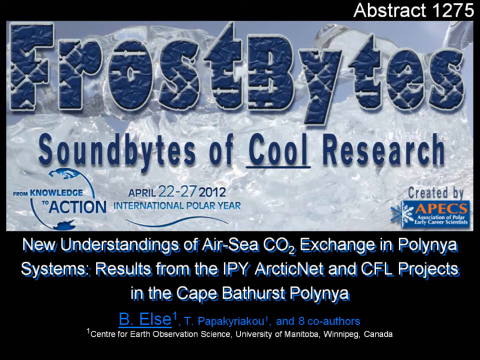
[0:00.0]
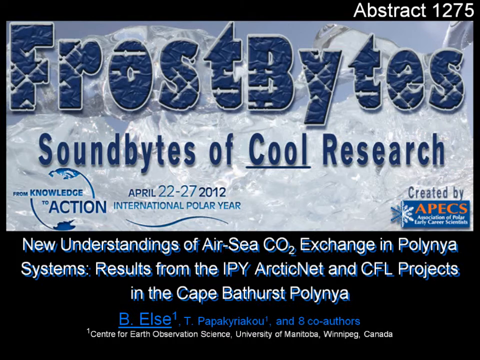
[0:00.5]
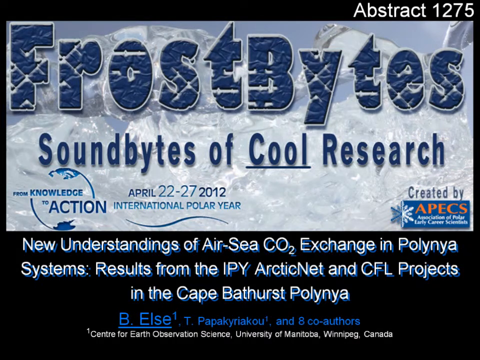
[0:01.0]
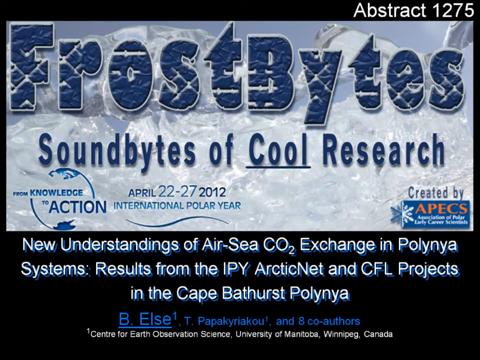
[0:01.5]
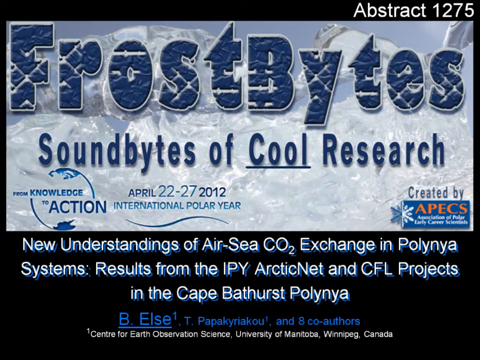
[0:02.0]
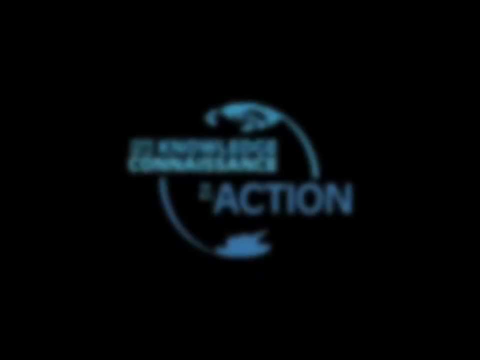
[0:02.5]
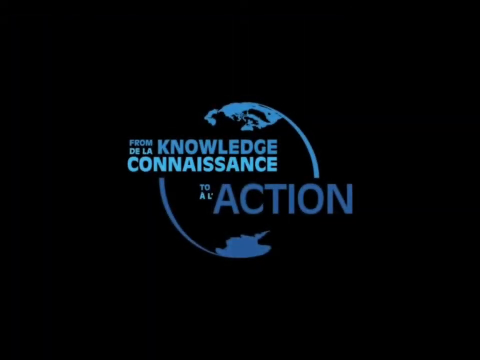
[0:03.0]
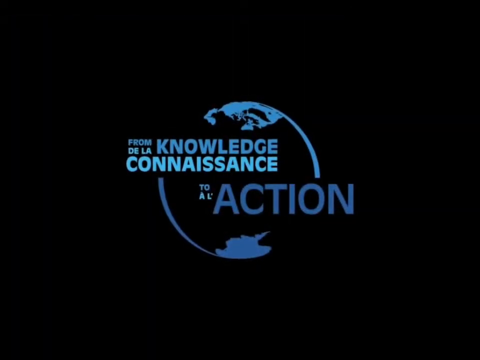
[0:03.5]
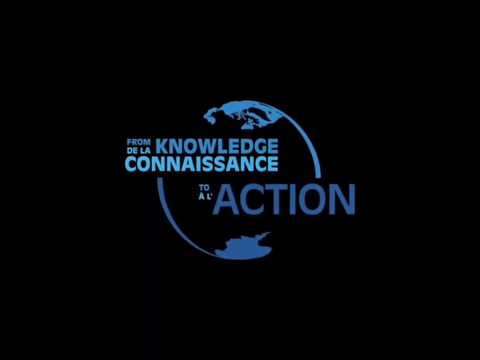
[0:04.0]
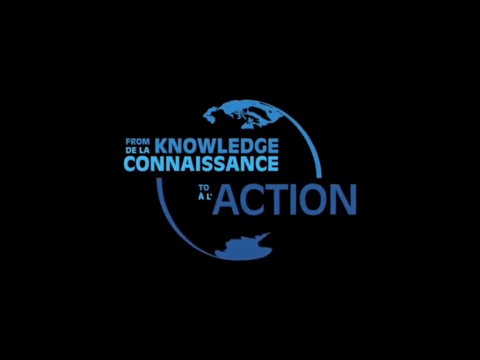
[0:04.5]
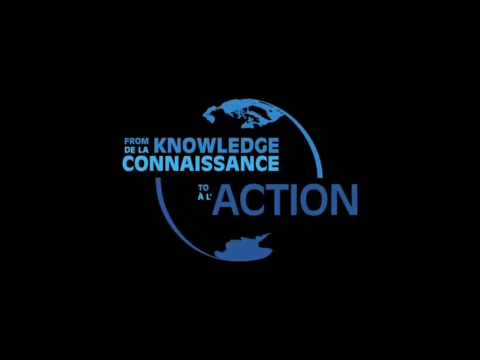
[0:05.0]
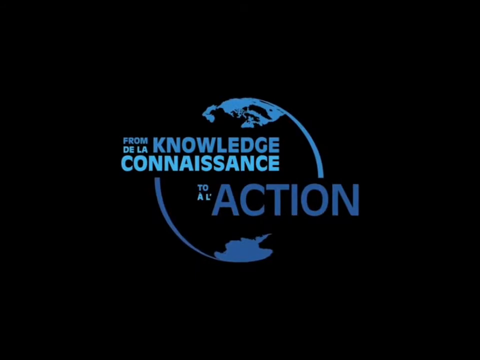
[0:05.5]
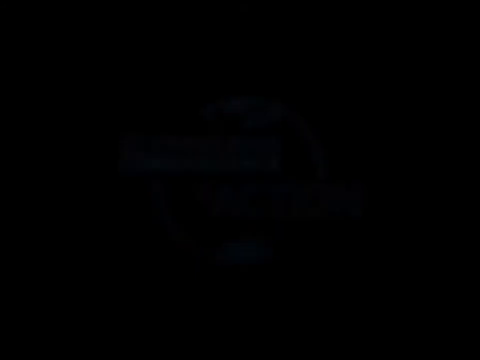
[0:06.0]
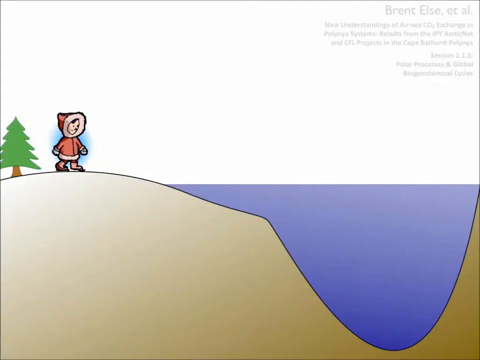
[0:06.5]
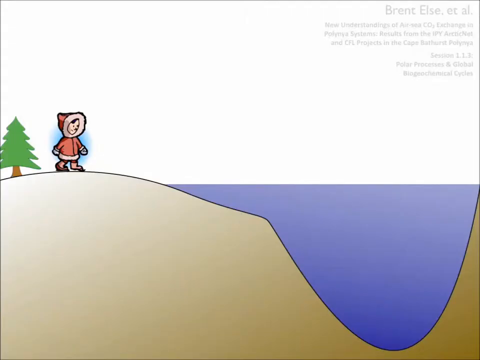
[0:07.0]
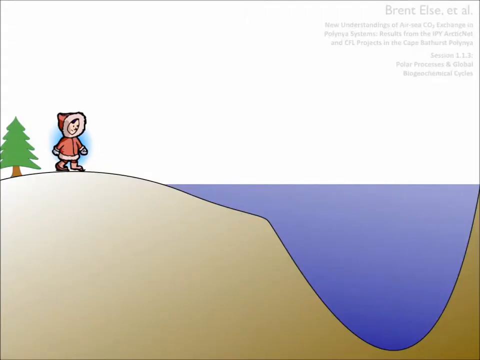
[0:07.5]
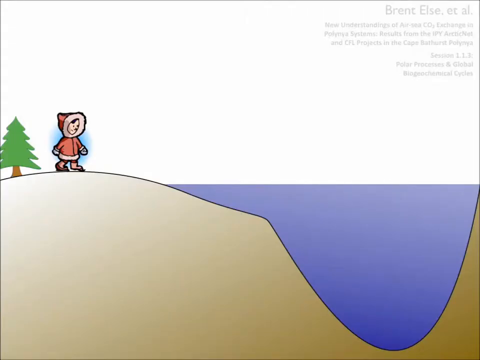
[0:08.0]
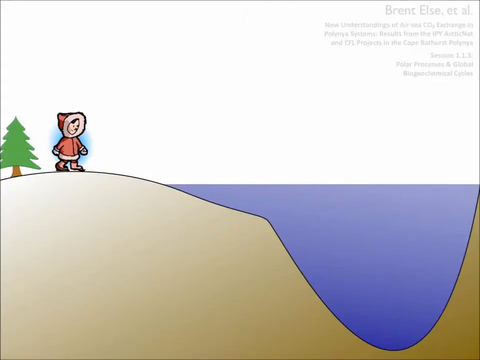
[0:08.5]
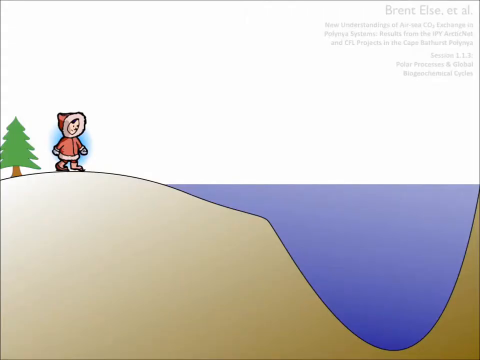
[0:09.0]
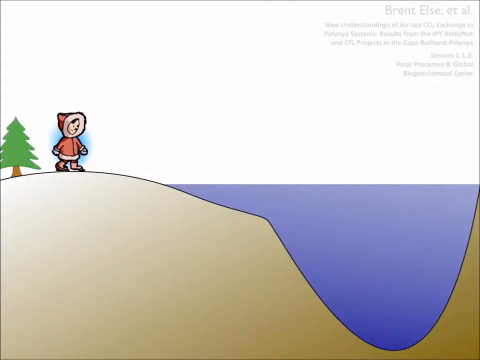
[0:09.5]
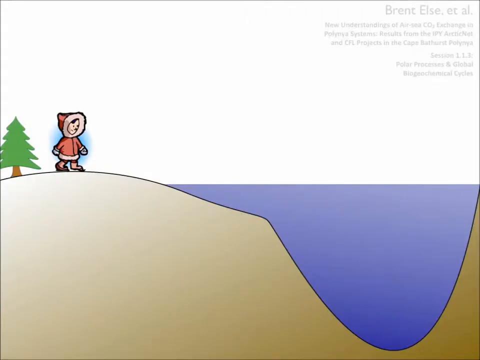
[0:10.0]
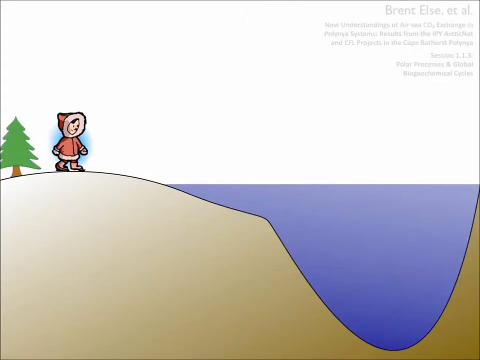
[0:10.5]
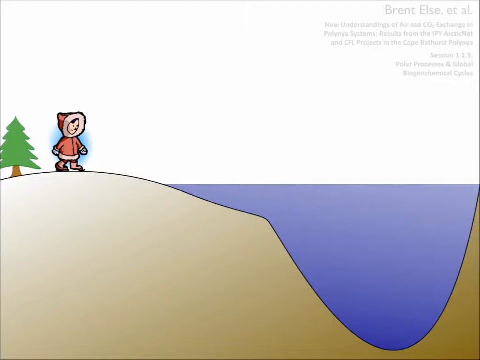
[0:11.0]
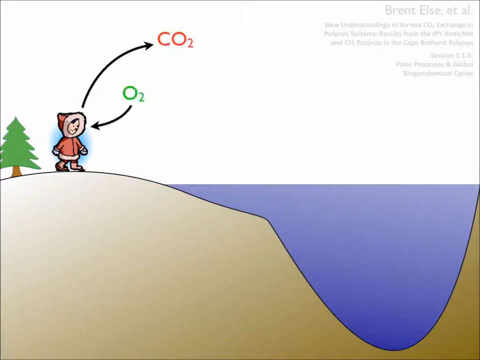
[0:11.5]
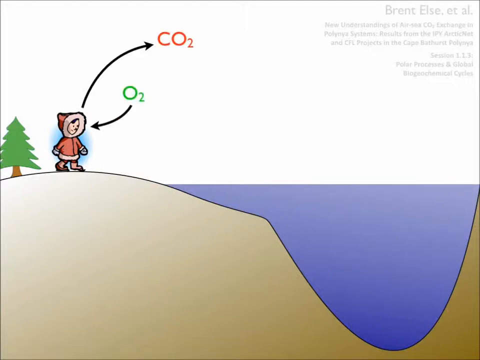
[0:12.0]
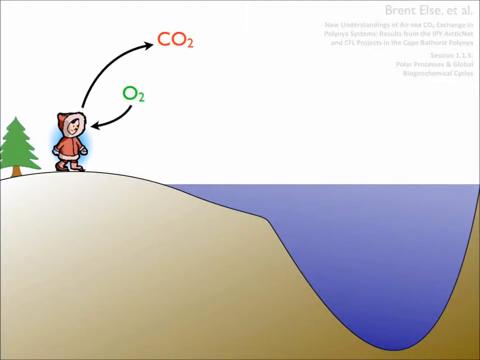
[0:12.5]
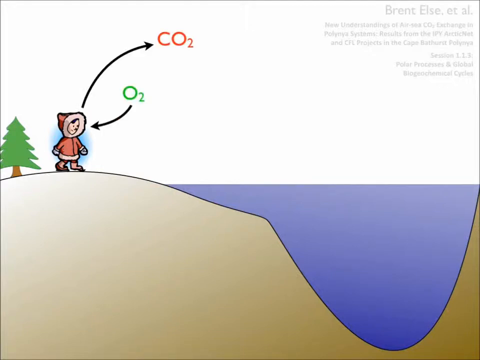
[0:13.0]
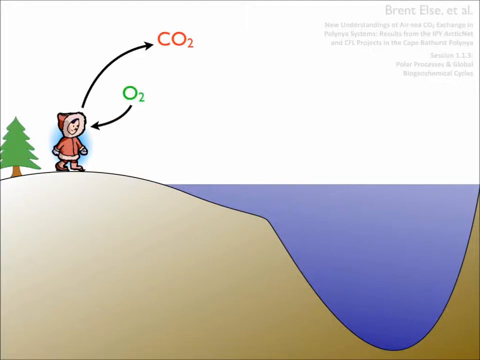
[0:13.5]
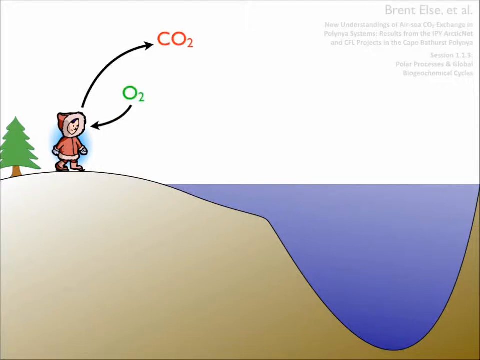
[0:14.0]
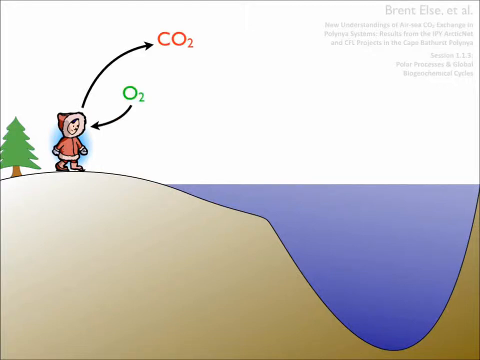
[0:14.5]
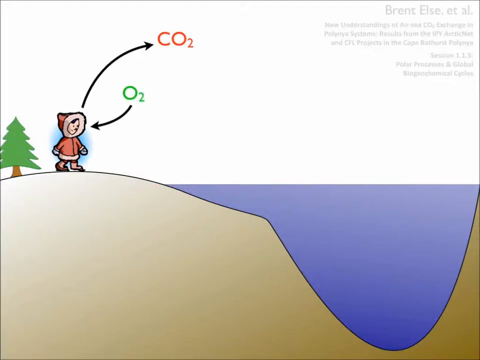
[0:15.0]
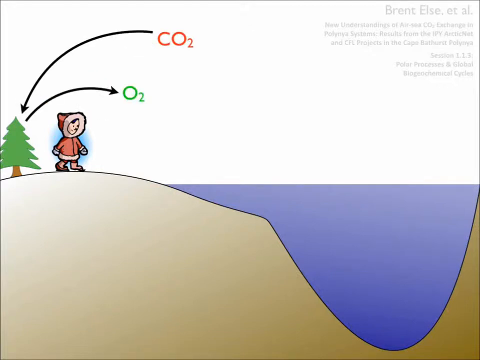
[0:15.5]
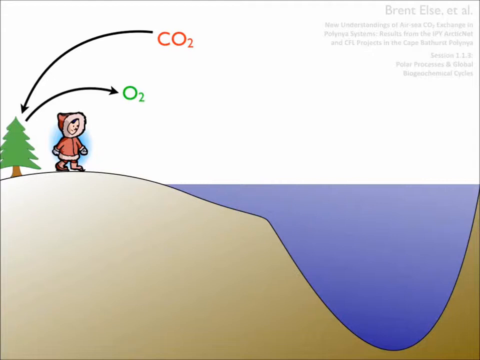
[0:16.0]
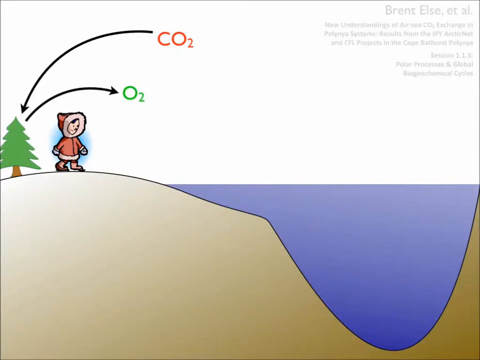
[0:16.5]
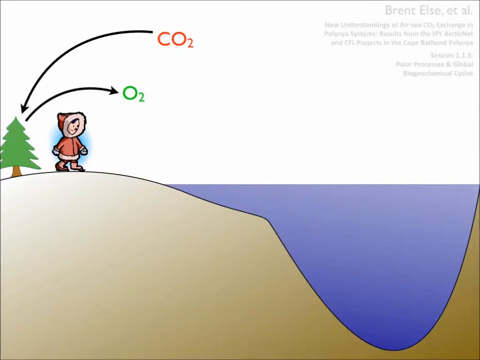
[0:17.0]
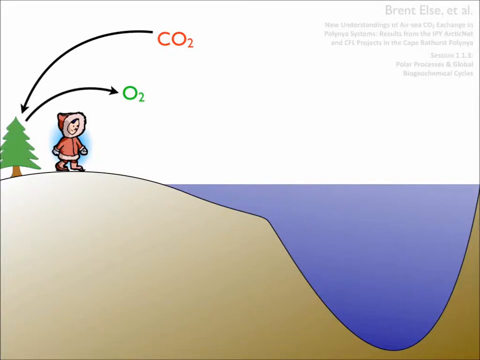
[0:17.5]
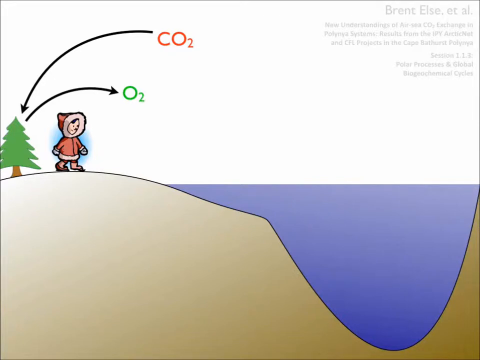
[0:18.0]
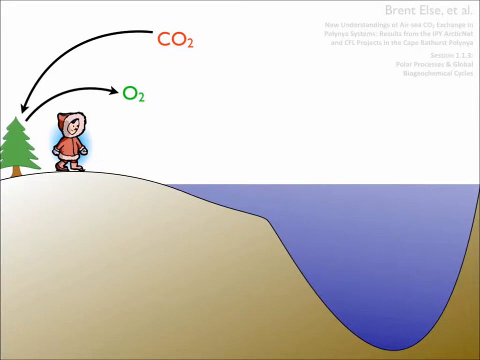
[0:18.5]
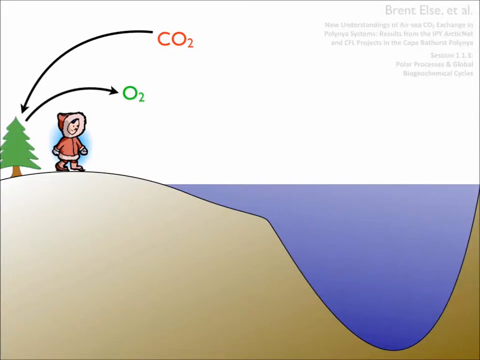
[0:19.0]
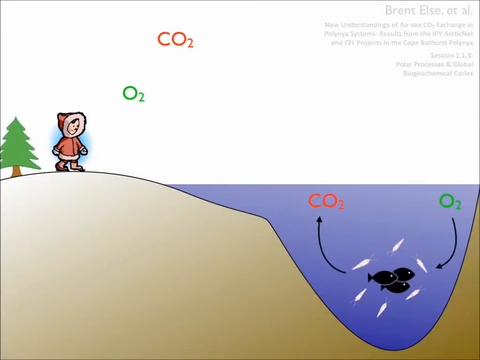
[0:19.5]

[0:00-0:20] The video opens on a title card identifying it as Abstract 1275, Frostbite's Sound Bites of Cold Research. "Frostbites" is written in big, chunky letters, with small sparkle-type graphics on the images that make it look like it is sparkling. The card shows that it is for April 22nd to the 27th, 2012, International Polar Year, created by APEX. Another logo says "From the knowledge to action." The series is about new understandings of air-sea CO2 exchange in Paulinia systems, with results from the IPY ArcticNet and CFL projects in the Cape Bathurst Paulinia. A blue globe logo then appears. The video cuts to a cartoon of a girl in a fur-lined parka, with a single tree at the edge of a body of water that cuts in quite deep. There is text in the upper right corner, but it is very hard to read because it is light colored. Two black arrows appear: one going away from the girl with "CO2" next to it in red, and another going toward the girl with "O2" in green. Next, two black arrows appear at the tree: one going to the tree with the red CO2, and one leaving the tree with the green O2. Two black fish are then drawn in the water, with black arrows: the one going to the fish is labeled O2, and the one leaving the fish says CO2 in red.